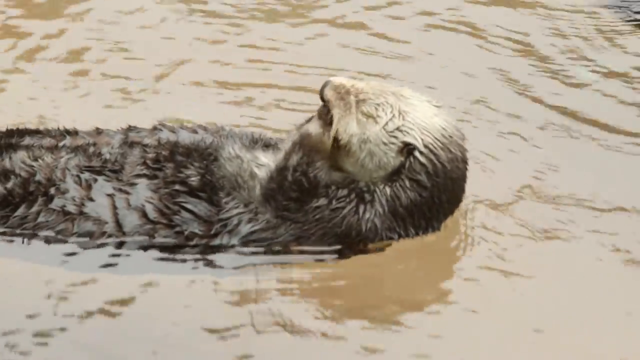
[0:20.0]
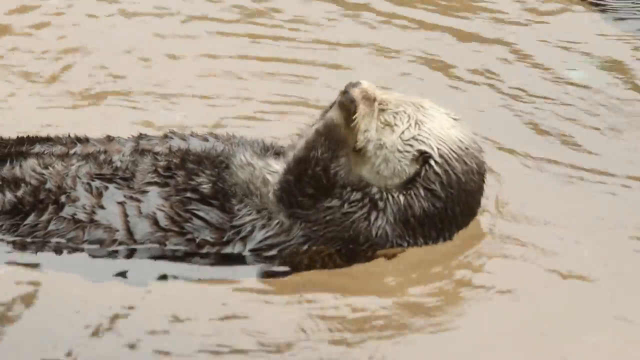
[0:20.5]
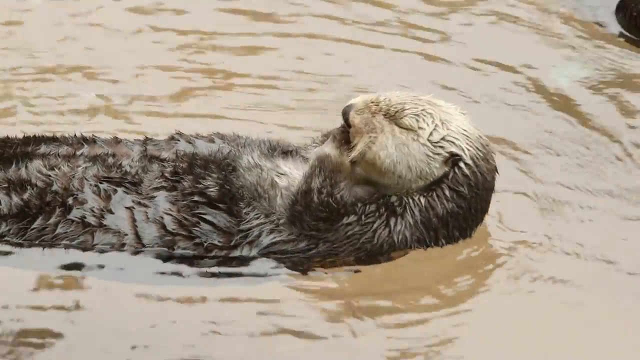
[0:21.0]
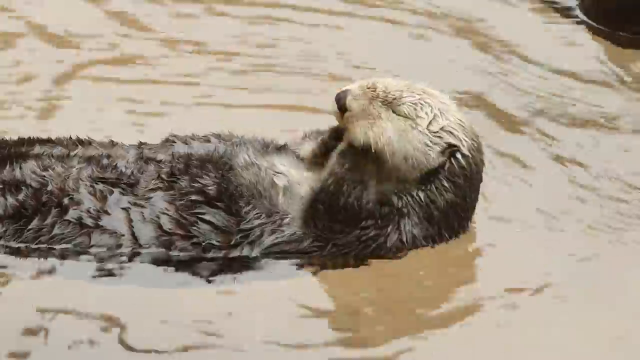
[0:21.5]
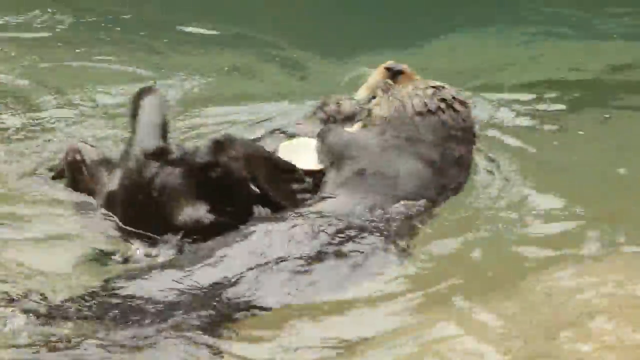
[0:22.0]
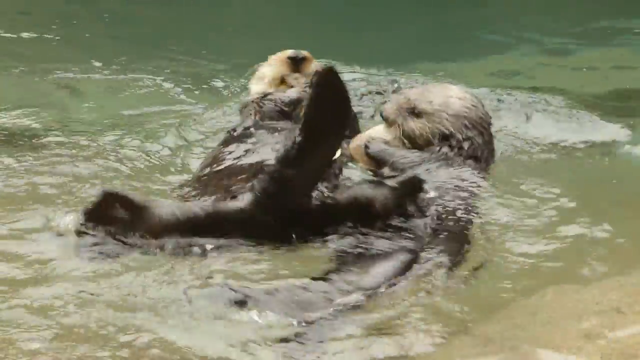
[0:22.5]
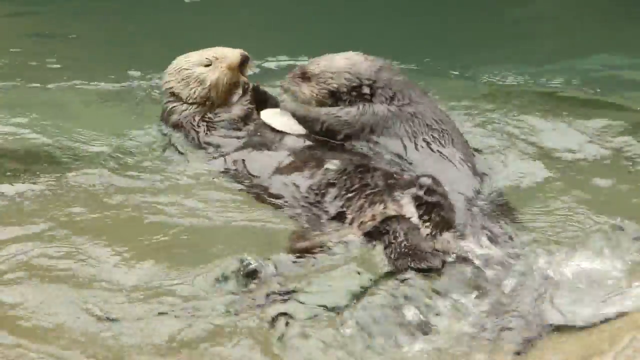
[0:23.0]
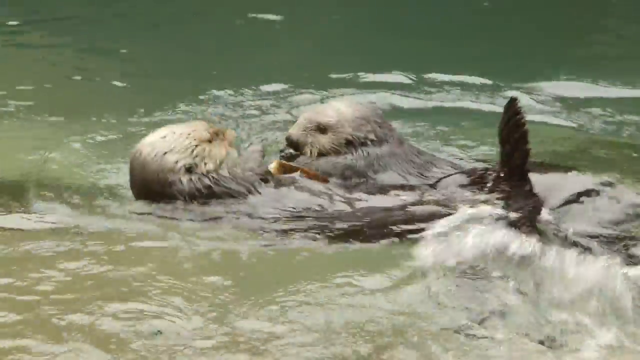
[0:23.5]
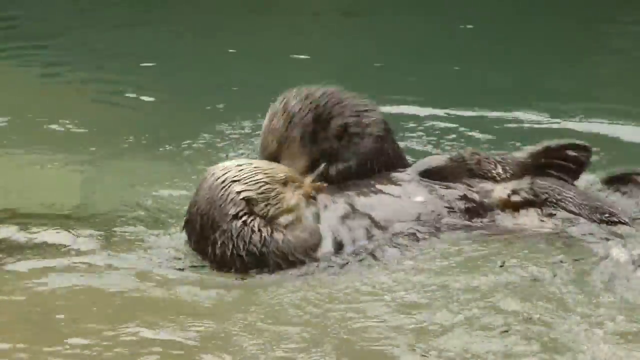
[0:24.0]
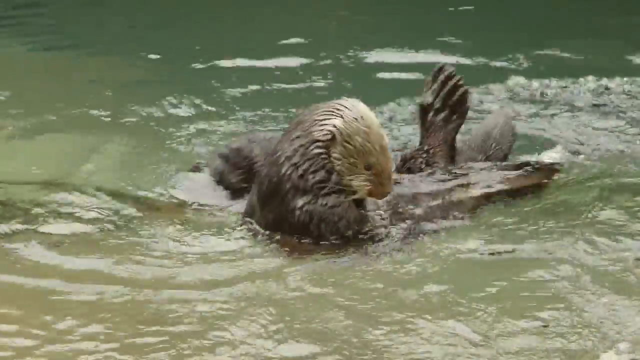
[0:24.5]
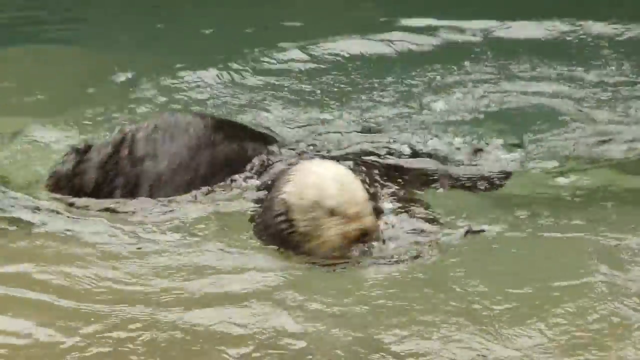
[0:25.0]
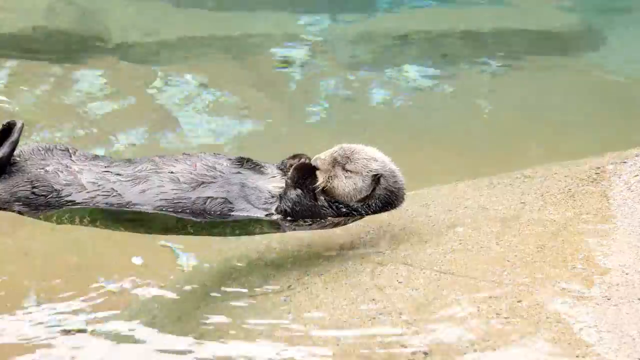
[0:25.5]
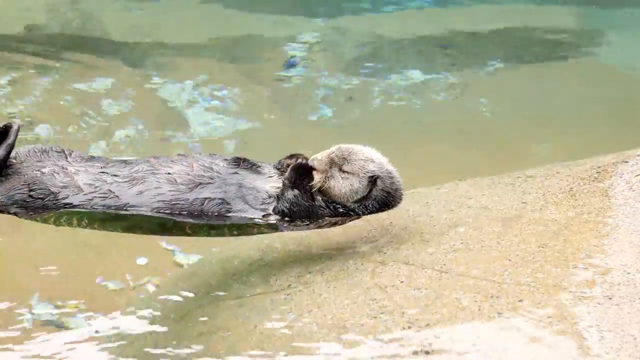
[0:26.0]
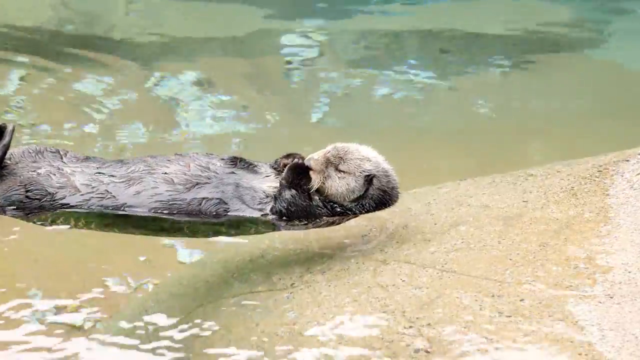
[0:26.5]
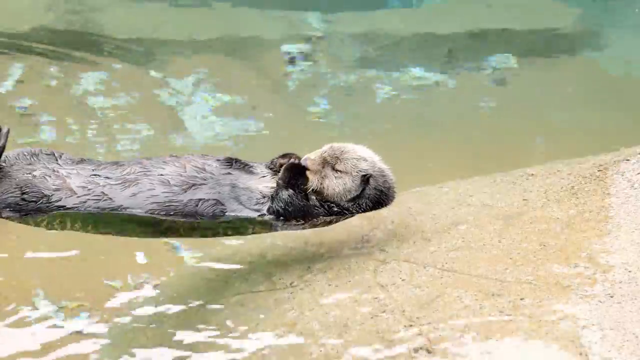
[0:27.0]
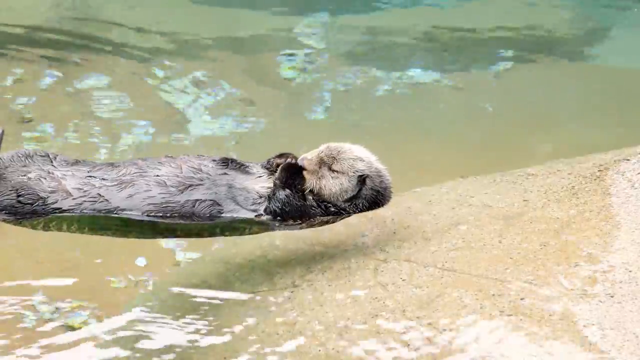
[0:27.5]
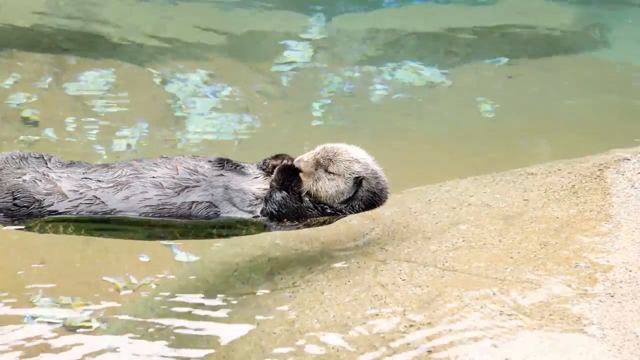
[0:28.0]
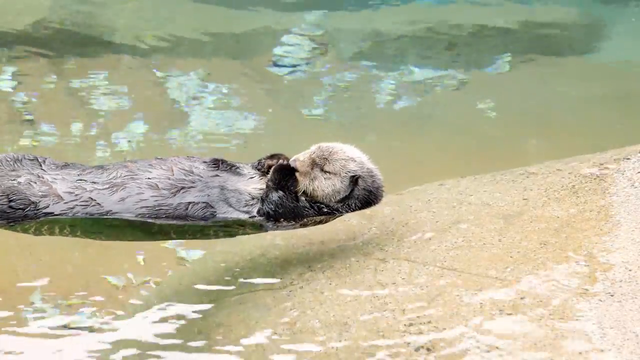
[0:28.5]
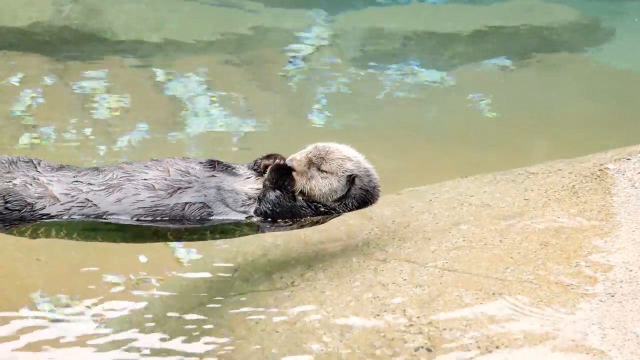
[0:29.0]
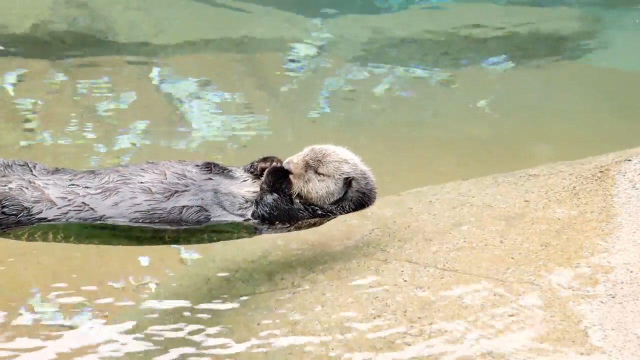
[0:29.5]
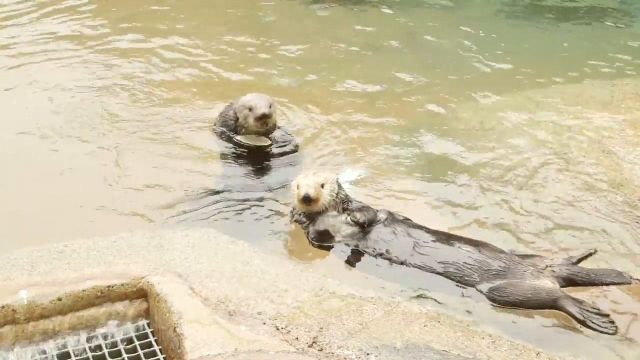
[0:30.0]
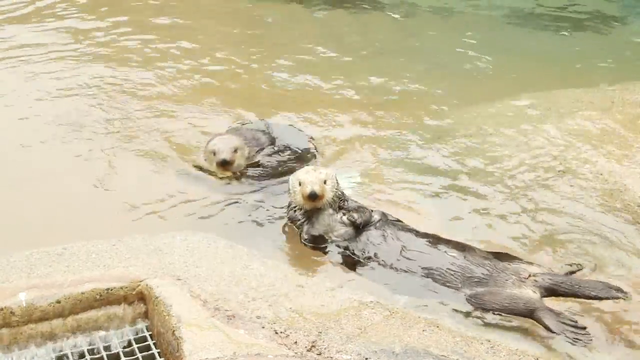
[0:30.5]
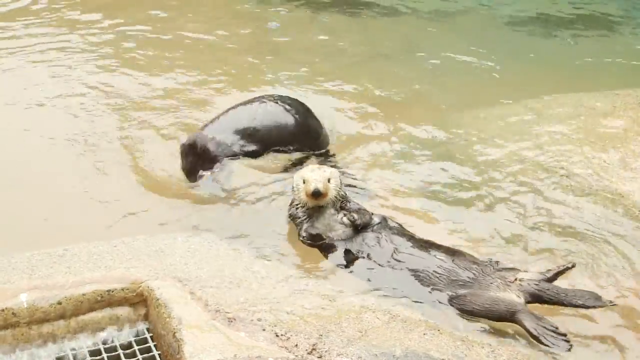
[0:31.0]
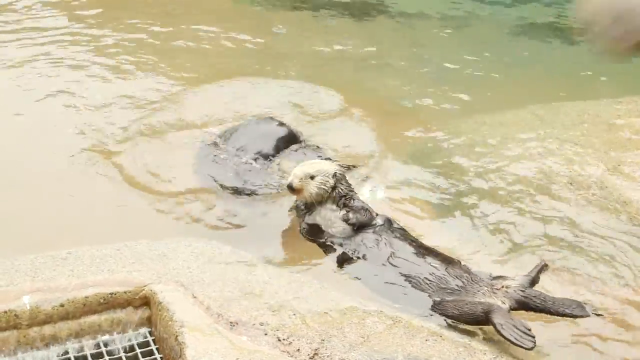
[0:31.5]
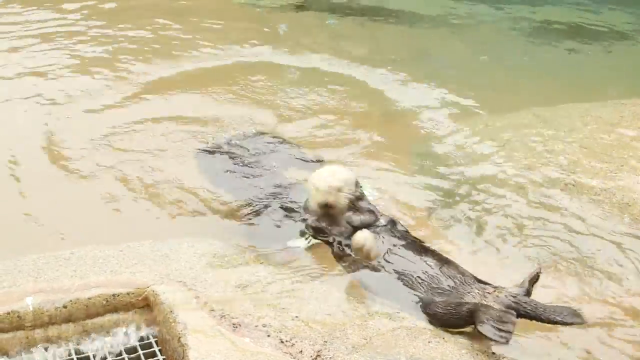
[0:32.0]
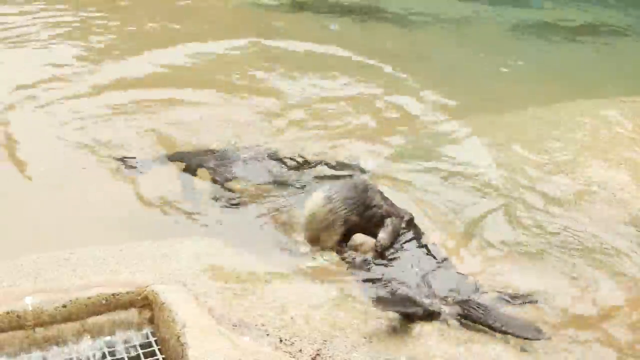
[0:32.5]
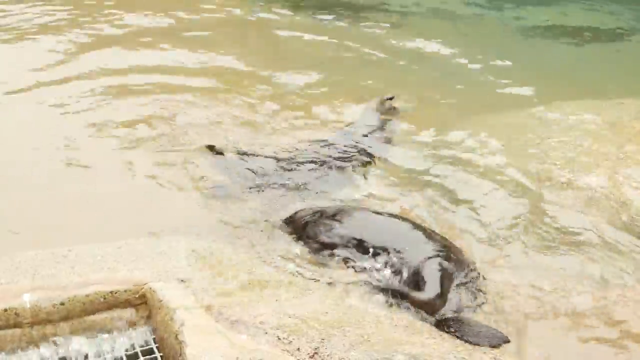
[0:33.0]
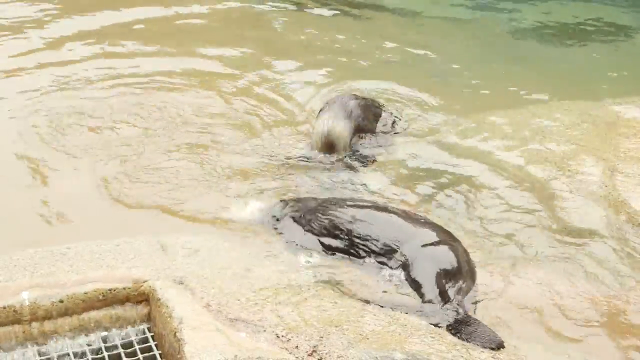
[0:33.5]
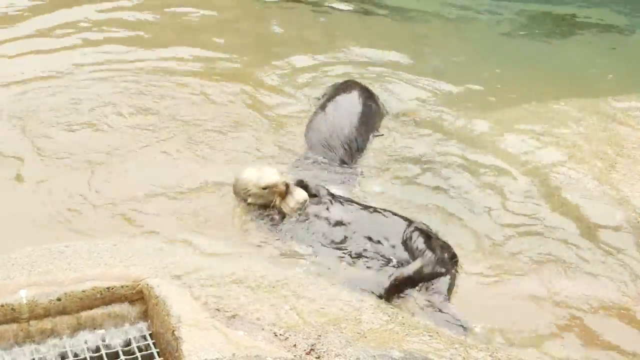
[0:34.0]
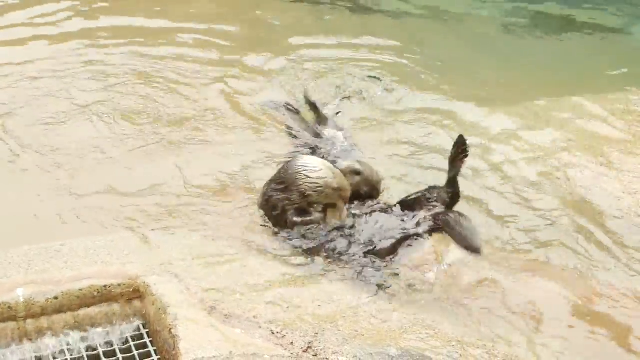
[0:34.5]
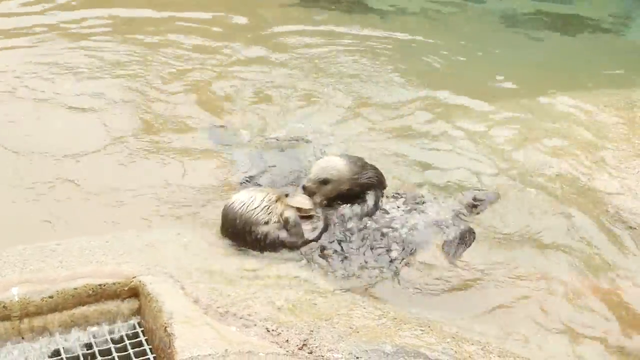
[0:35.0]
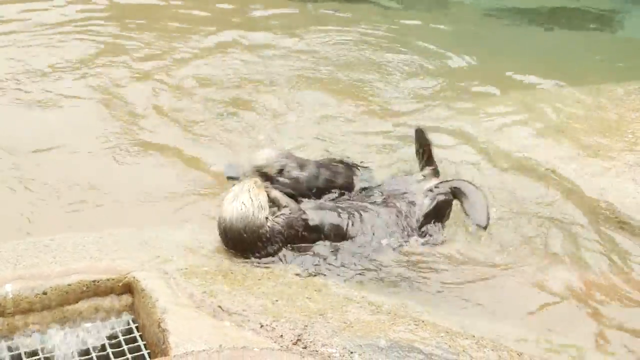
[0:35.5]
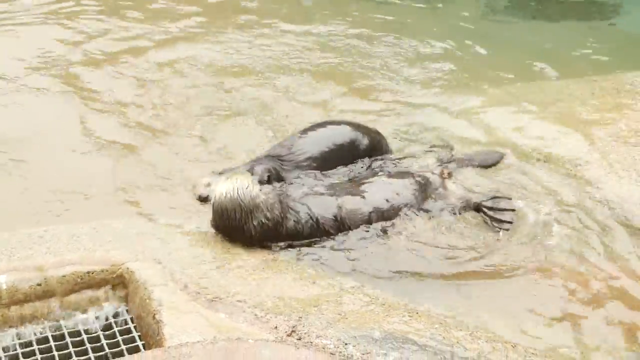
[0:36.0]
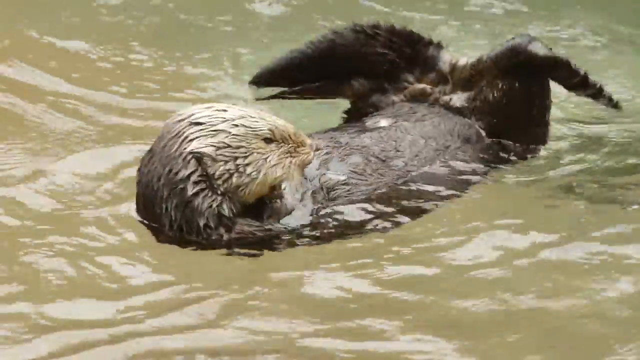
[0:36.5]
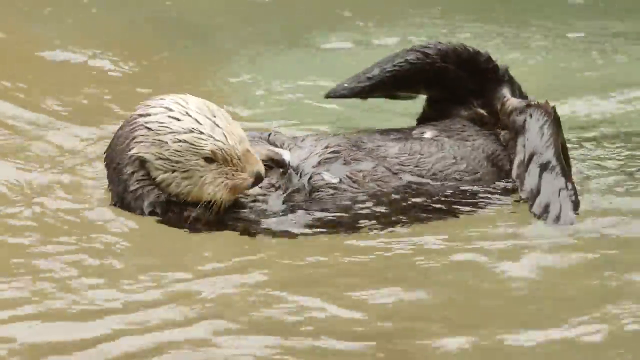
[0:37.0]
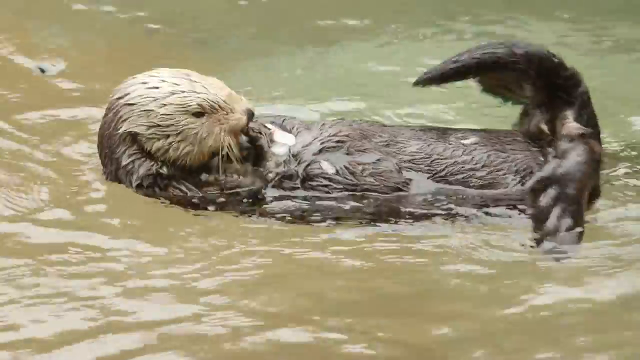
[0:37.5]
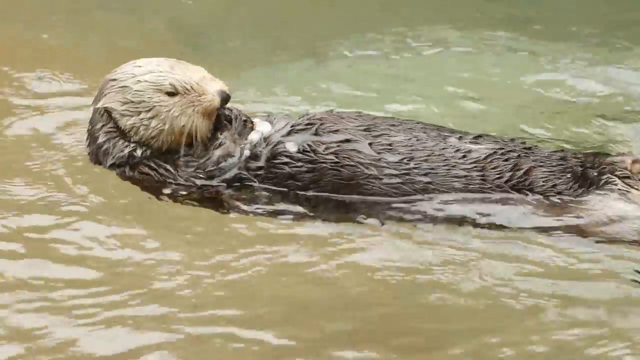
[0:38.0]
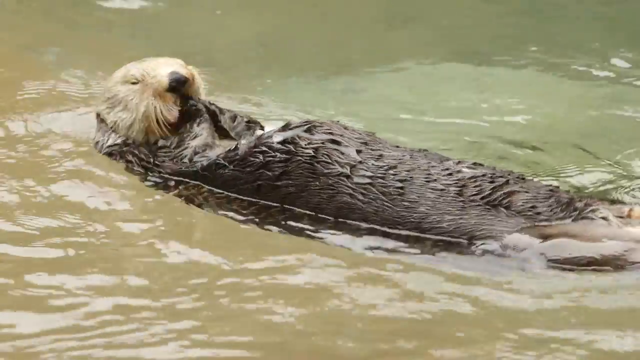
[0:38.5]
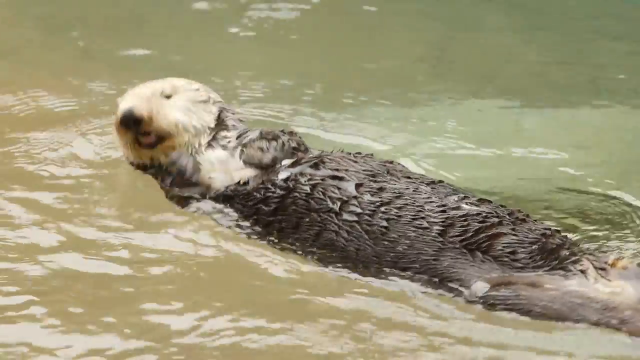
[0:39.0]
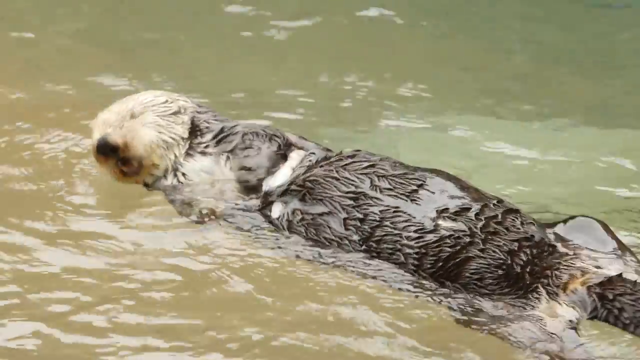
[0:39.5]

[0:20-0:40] Otters play in the water, apparently also eating something as they play, turning the water brown. Some of the water overflows as they play and flows into a hole. The otters stand as they play. A ray of sunlight falls on the scene, and some otters are enjoying the sunlight. Someone throws food to them from the upper ground. The water turns from colorless to brown as the otters move, grabbing things and eating.